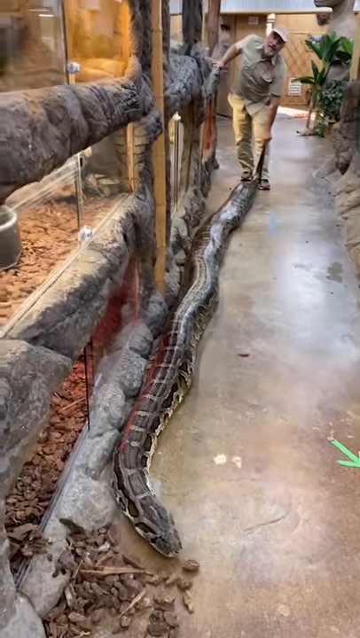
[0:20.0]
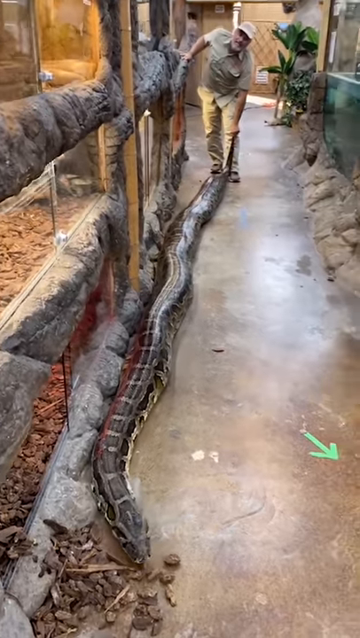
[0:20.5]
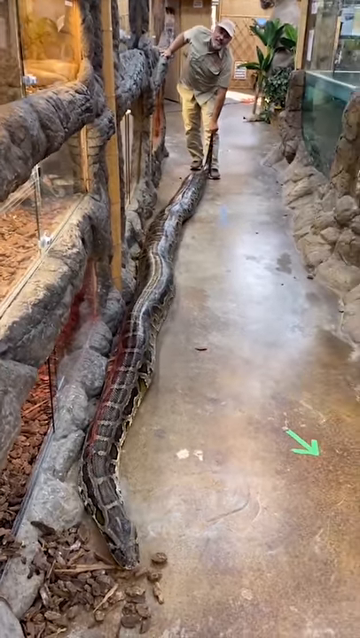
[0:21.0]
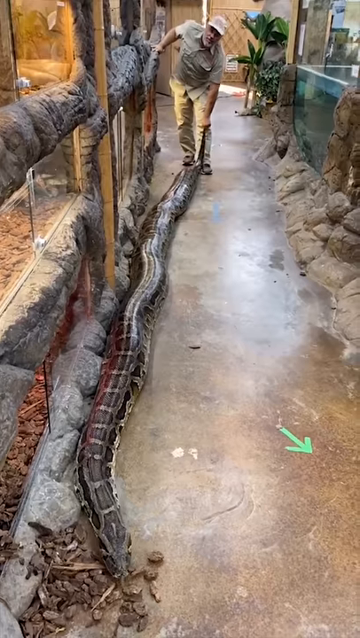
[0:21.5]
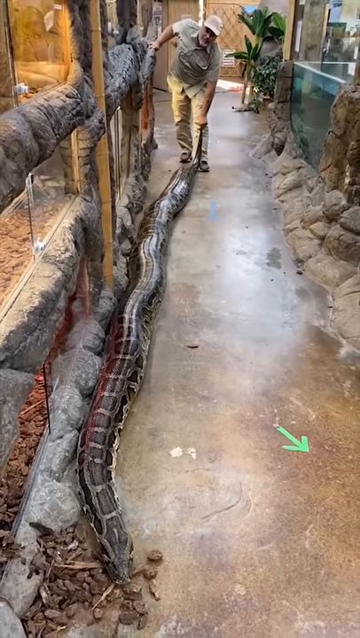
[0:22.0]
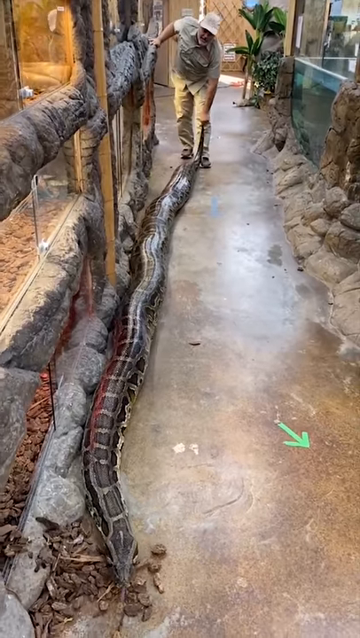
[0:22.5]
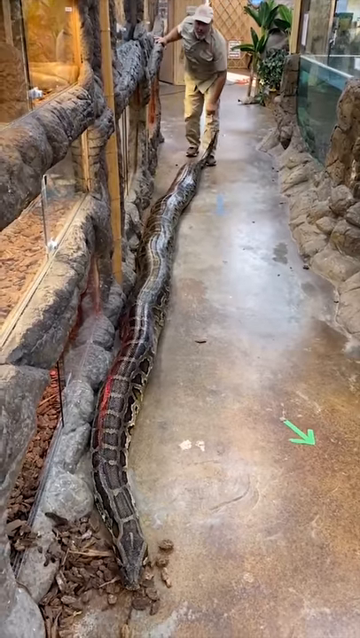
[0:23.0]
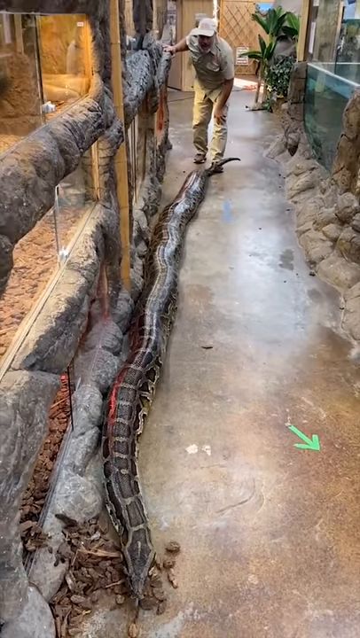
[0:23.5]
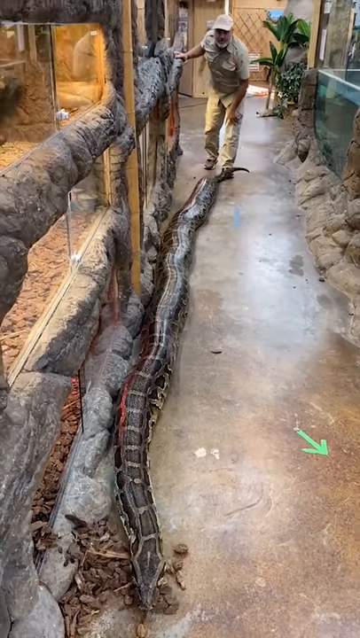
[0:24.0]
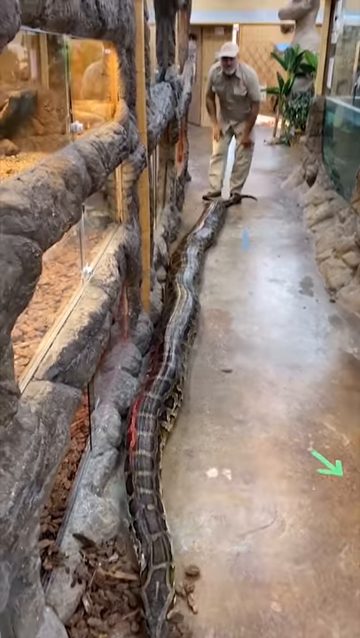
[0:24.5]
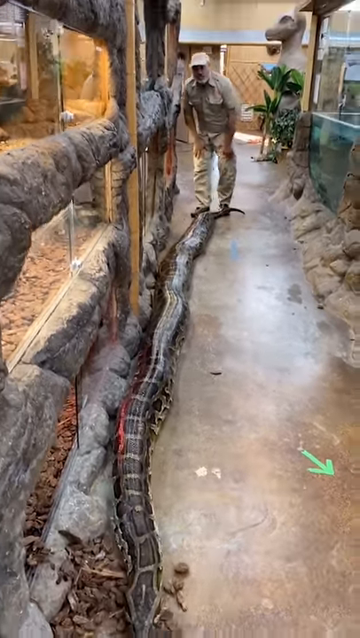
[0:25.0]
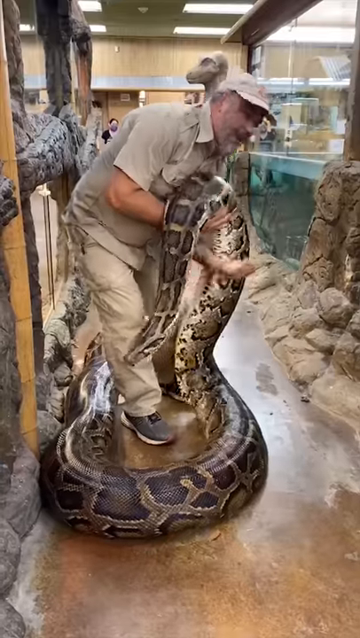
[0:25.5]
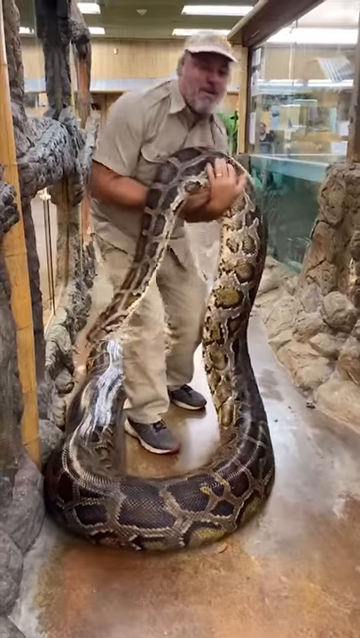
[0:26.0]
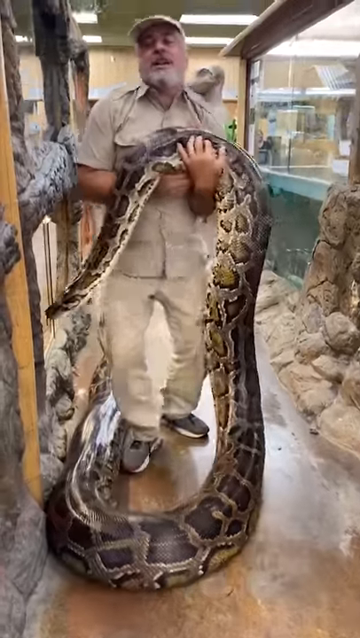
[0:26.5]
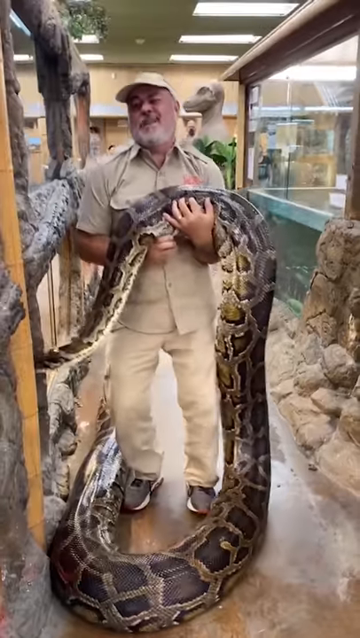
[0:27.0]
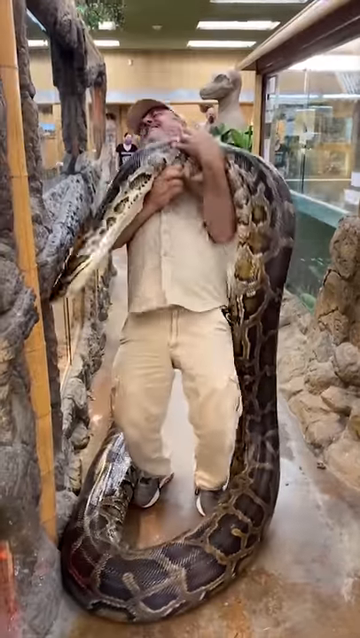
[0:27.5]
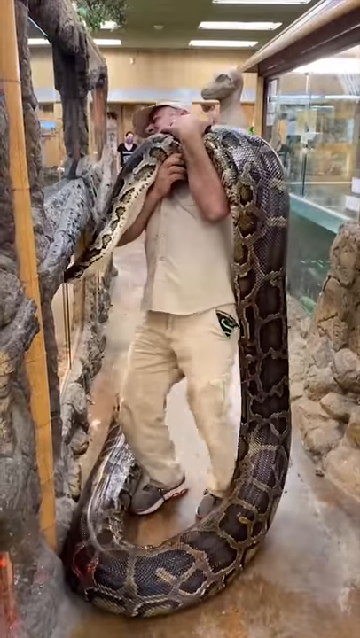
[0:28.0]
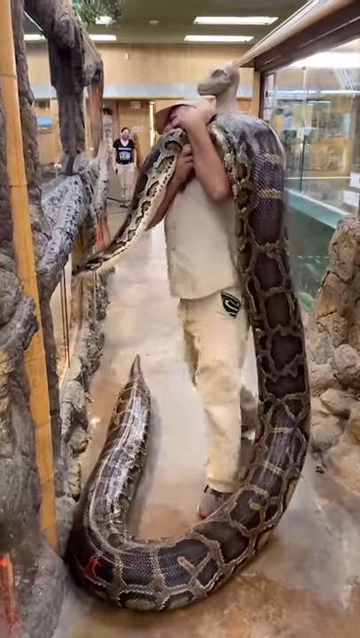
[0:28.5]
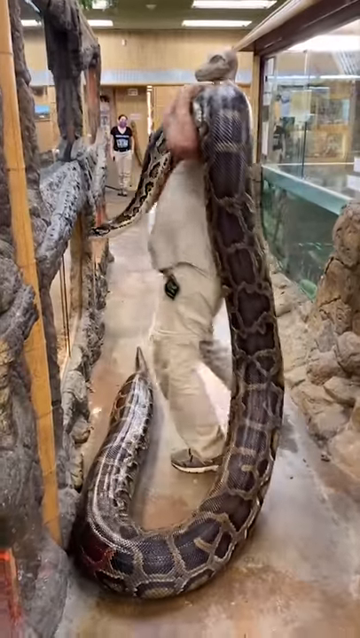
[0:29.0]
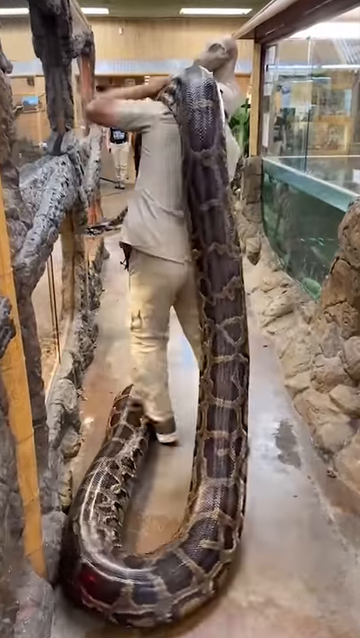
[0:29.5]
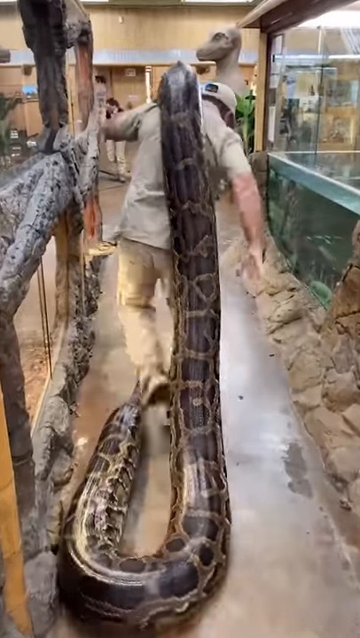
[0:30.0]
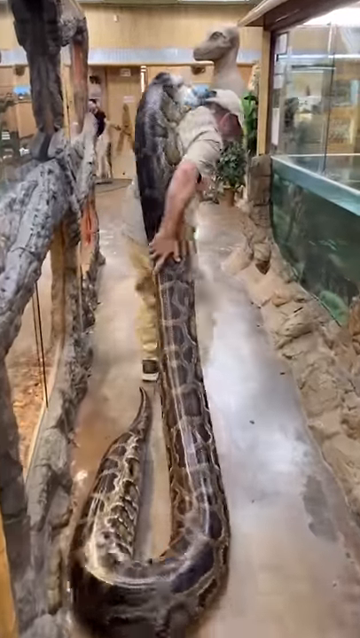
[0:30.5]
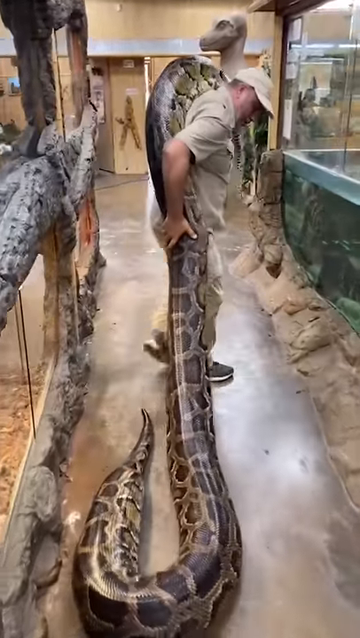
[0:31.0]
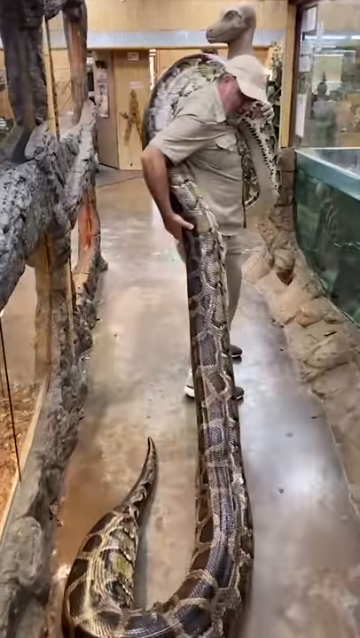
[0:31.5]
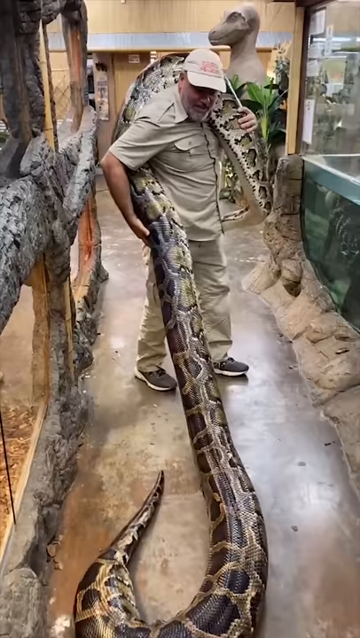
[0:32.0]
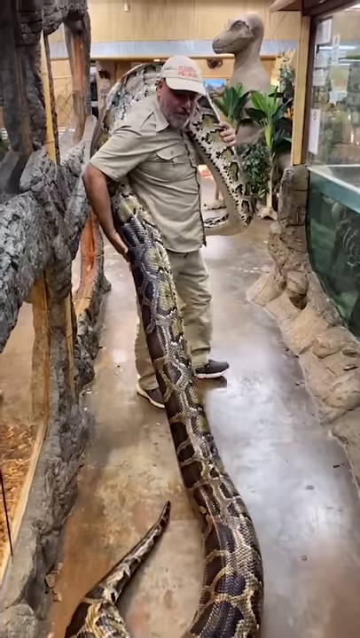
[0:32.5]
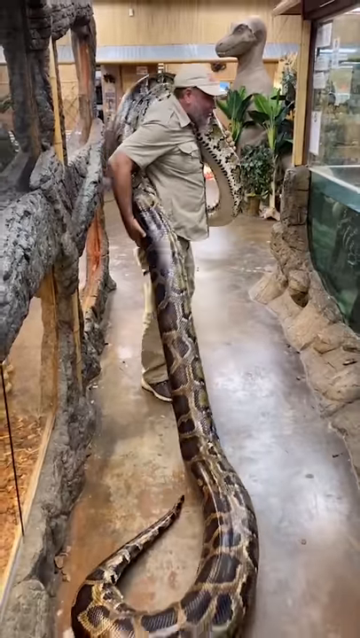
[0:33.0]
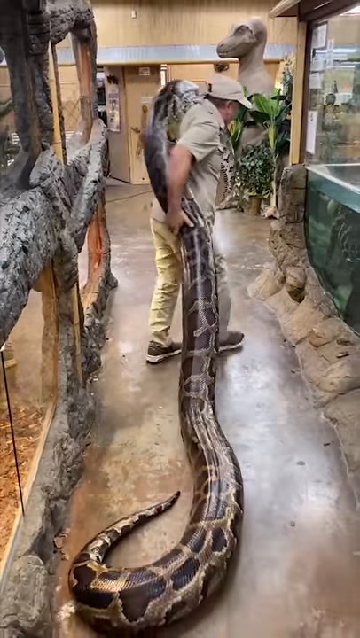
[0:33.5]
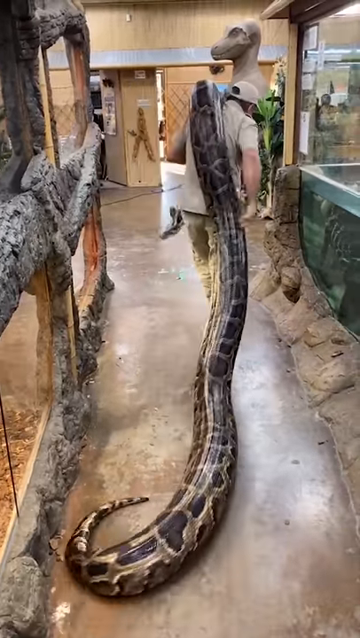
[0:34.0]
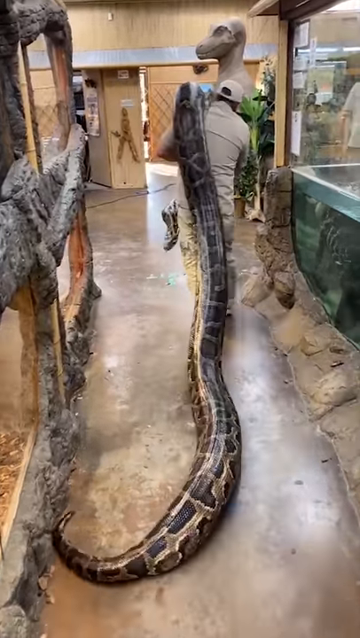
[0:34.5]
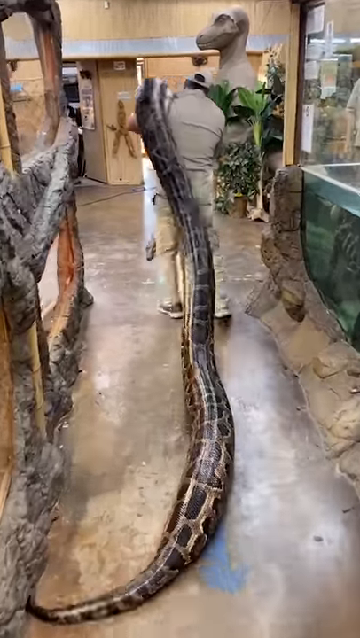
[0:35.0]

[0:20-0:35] The python crawls further away while the gentleman holds on to its tail. He drops the tail, and the python seems to speed up a little as it crawls toward the camera. Looking a little concerned, he hurriedly walks up to the python's head, picks it up, and slings the head and part of the body around his back and over his left shoulder. He drags the python, which probably weighs several hundred pounds, with most of its body dragging along the ground. The python starts to move out of his control, out of his left hand, as he turns his back to the camera and walks away, dragging the snake, possibly back to an enclosure. In the background there is an office door and an odd sculpture that looks like a crude version of some sort of reptile; the place may be a zoological garden, a touch-and-feel exhibit, or a reptile store.